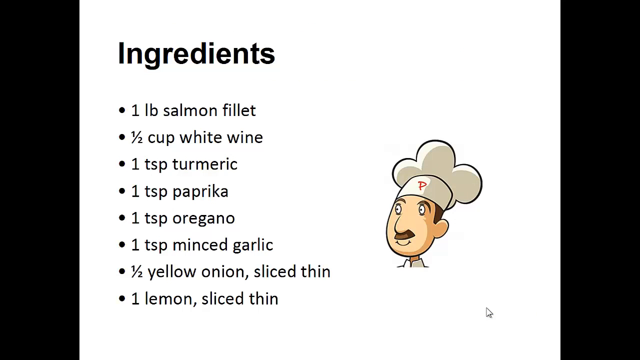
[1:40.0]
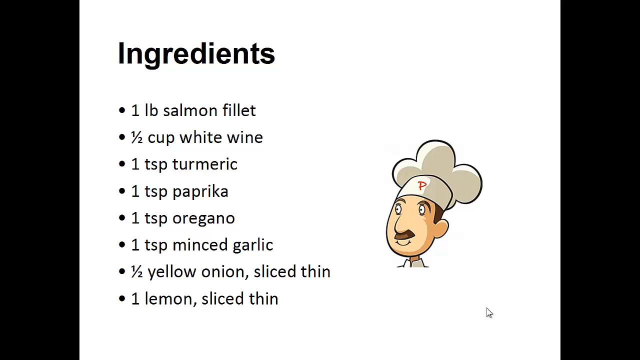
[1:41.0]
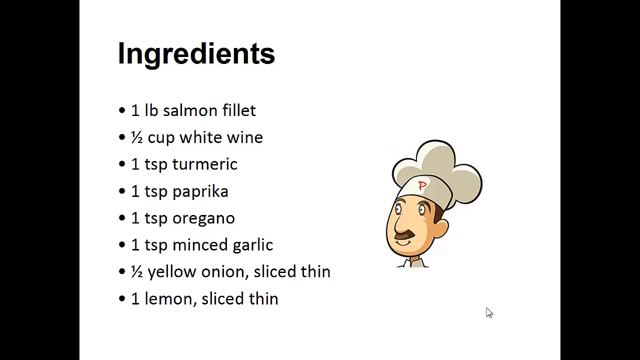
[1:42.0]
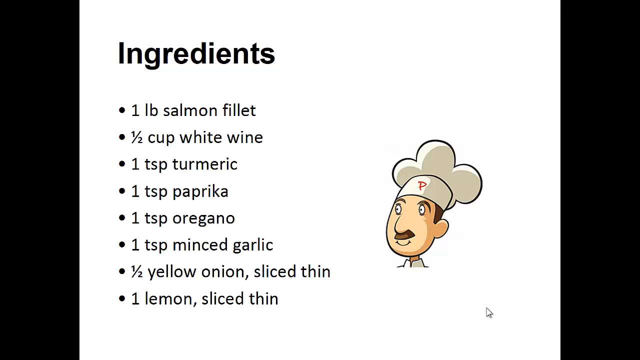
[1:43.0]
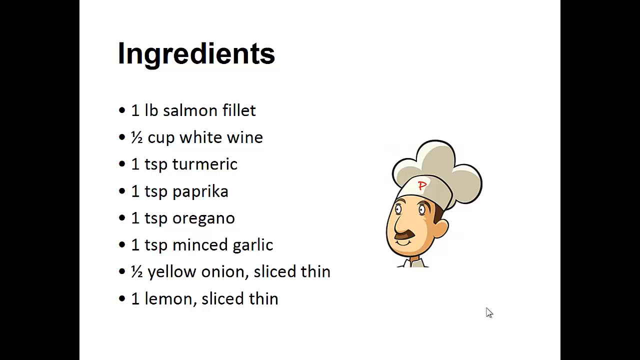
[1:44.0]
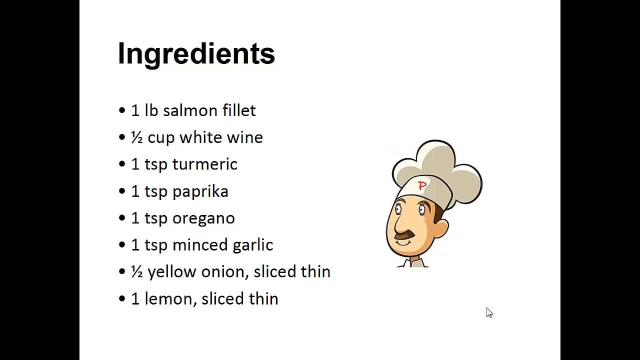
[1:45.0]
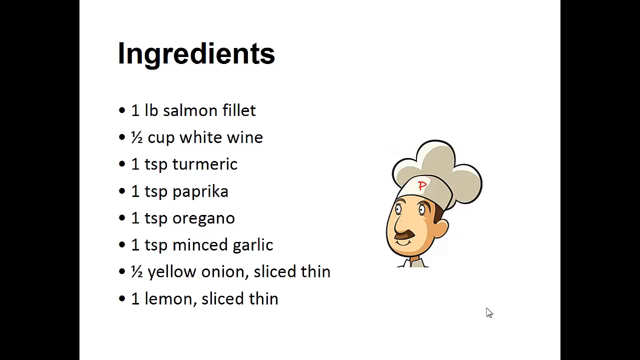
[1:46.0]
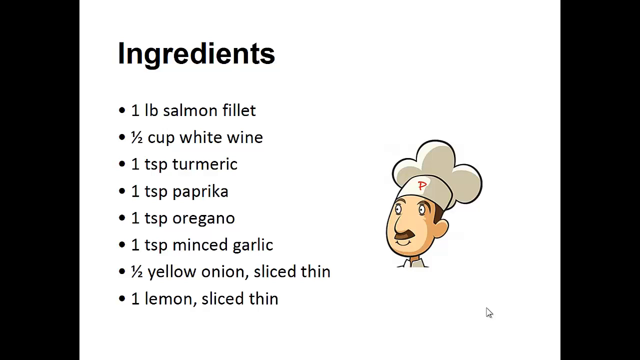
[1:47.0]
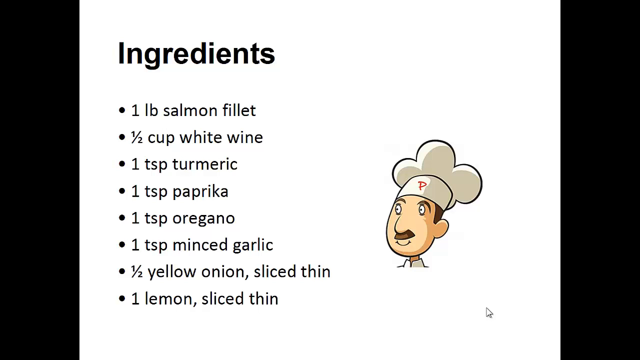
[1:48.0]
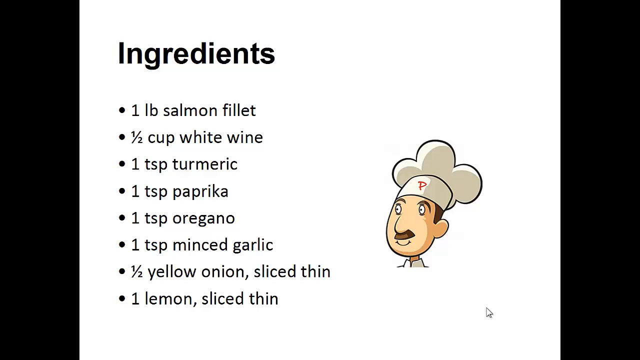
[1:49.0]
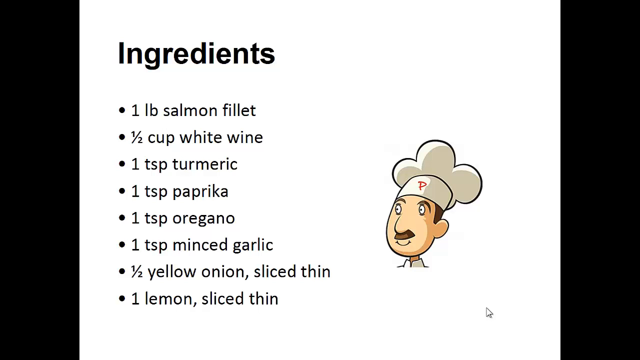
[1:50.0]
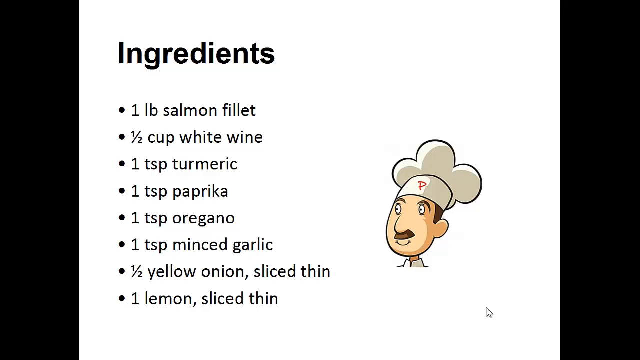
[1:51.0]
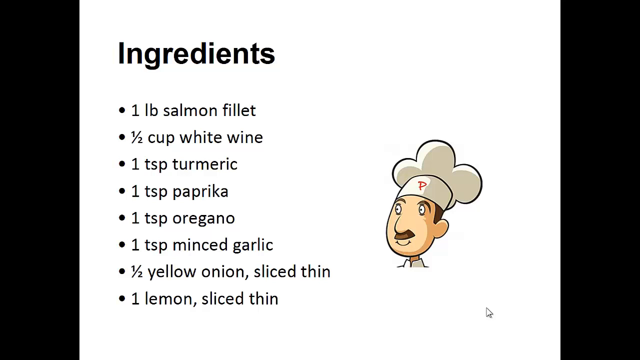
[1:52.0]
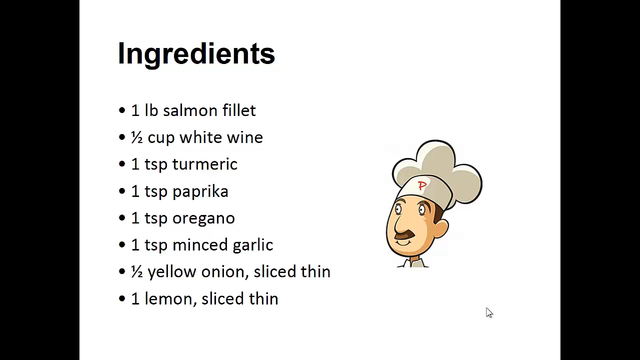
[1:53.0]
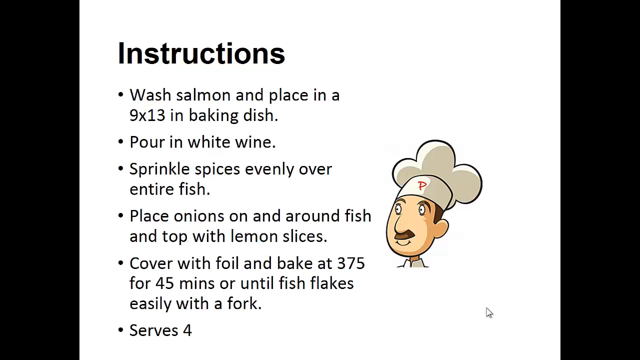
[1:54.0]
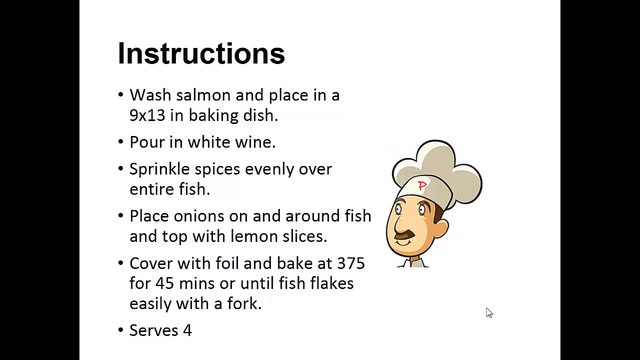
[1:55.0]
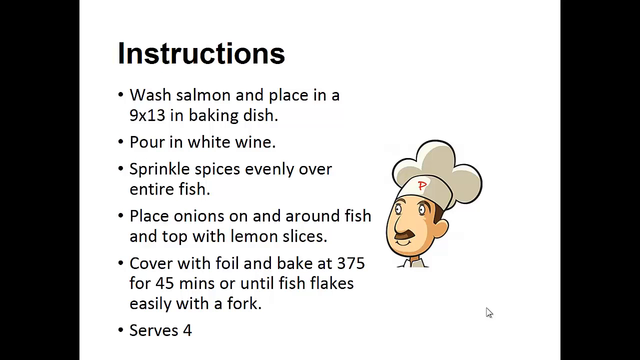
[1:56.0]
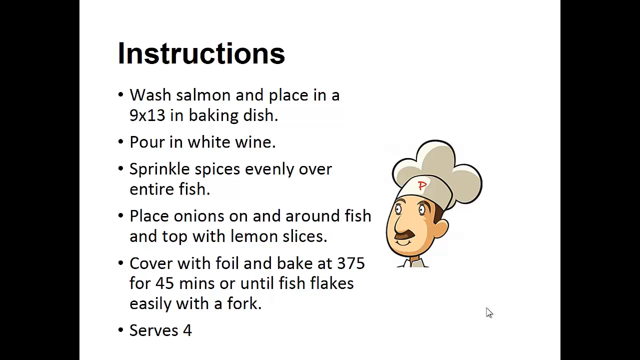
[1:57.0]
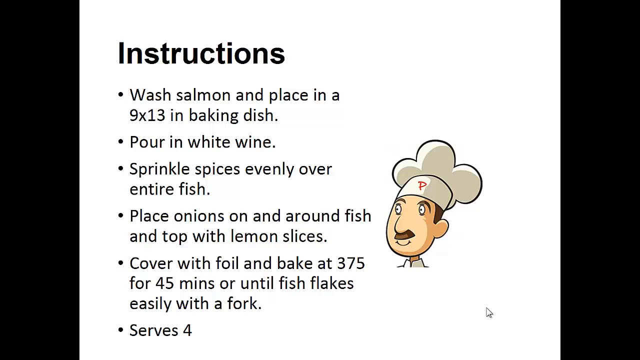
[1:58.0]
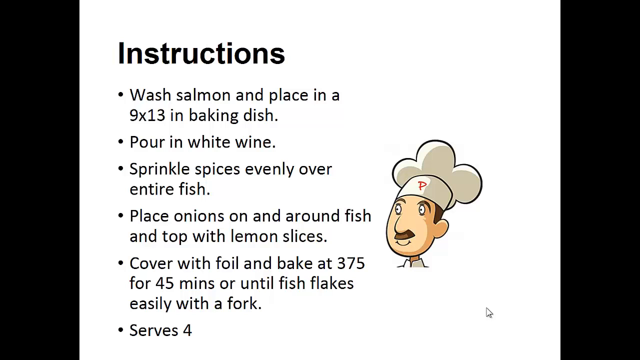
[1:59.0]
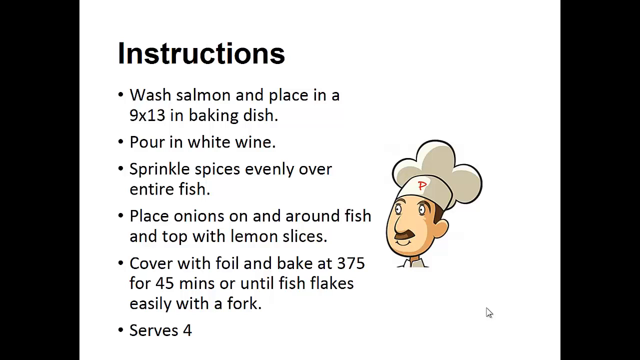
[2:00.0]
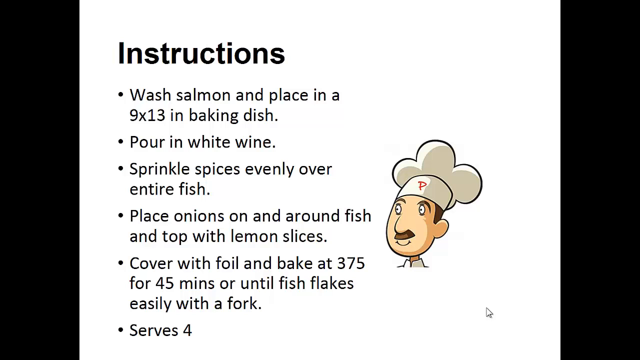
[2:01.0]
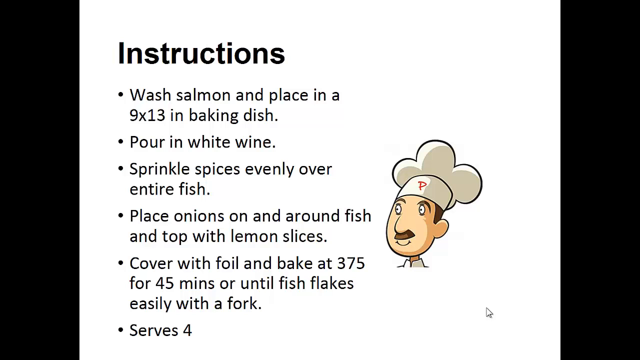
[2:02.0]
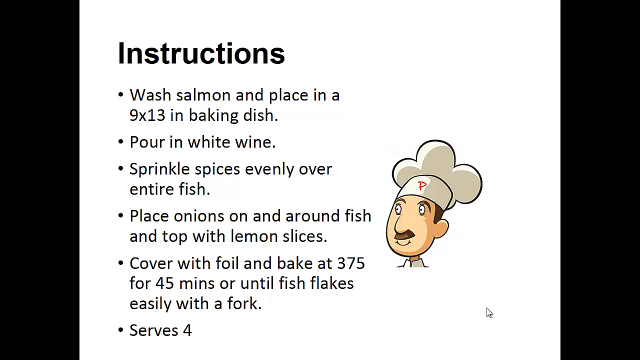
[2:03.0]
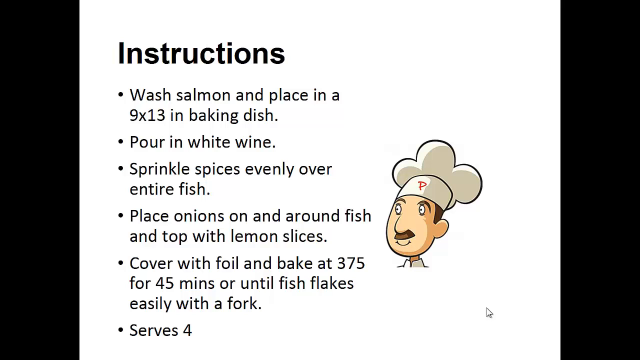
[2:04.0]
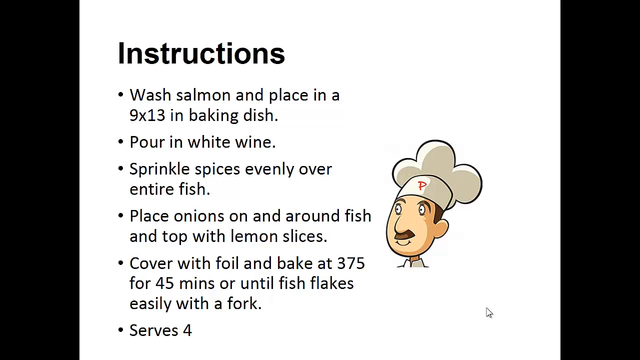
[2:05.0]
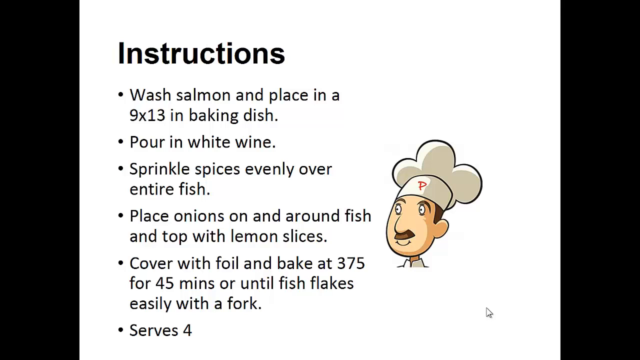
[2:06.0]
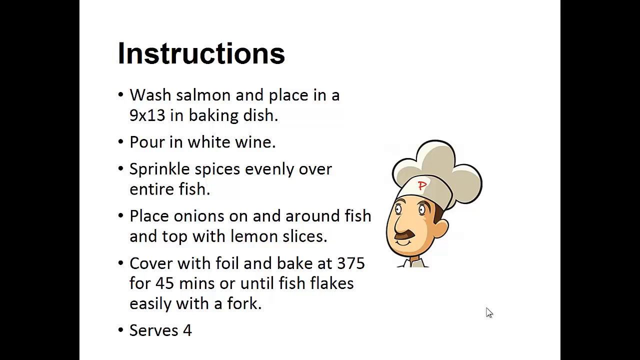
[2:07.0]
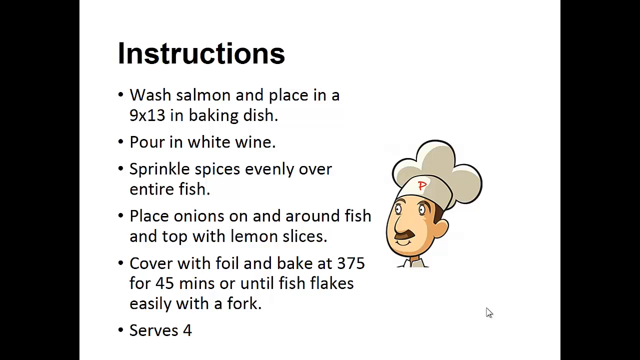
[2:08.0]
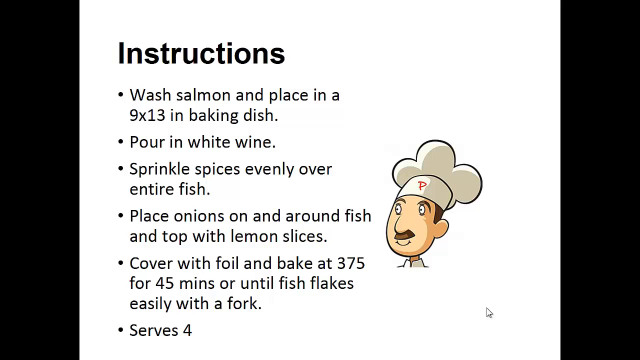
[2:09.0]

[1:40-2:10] Each ingredient is preceded by a bullet dot. The list continues with one teaspoon of turmeric, one teaspoon of paprika, one teaspoon of oregano, one teaspoon of minced garlic, half a yellow onion sliced thin, and one lemon sliced thin. The cartoon chef remains visible.